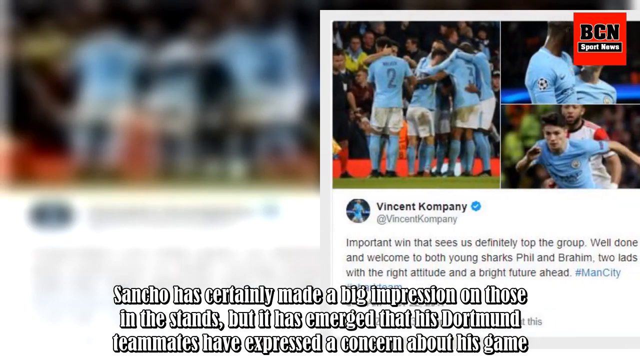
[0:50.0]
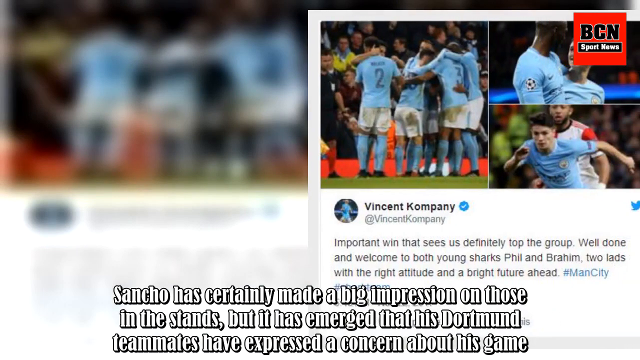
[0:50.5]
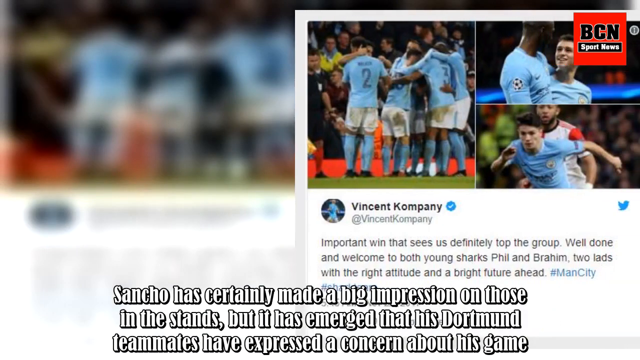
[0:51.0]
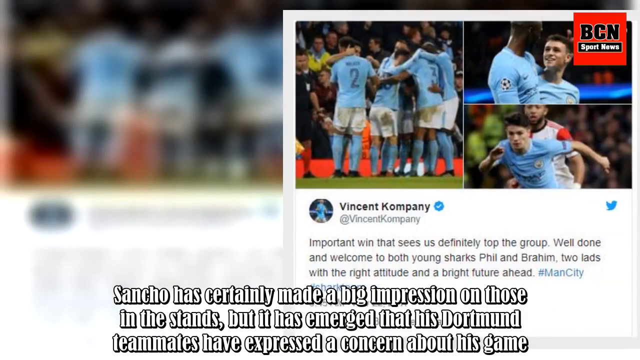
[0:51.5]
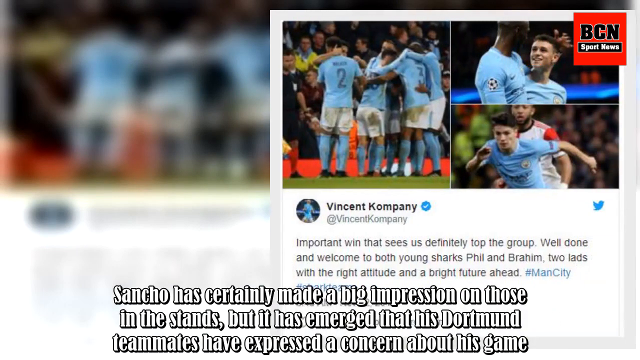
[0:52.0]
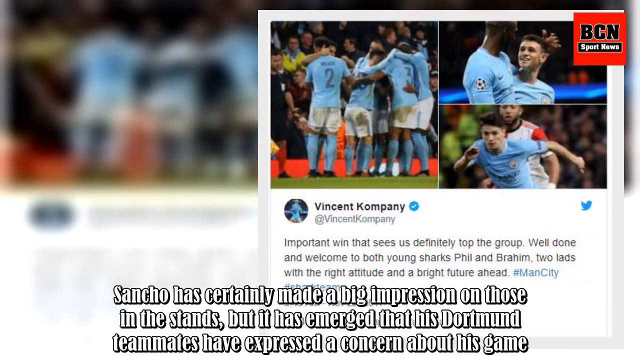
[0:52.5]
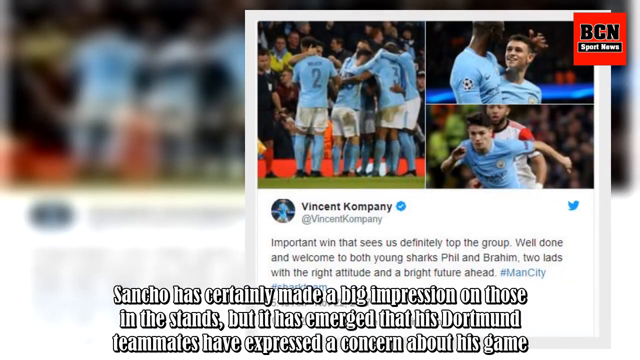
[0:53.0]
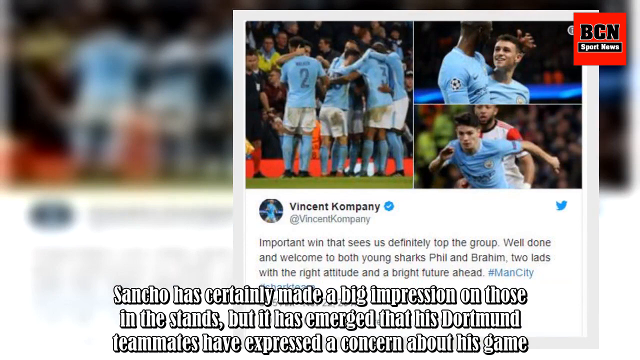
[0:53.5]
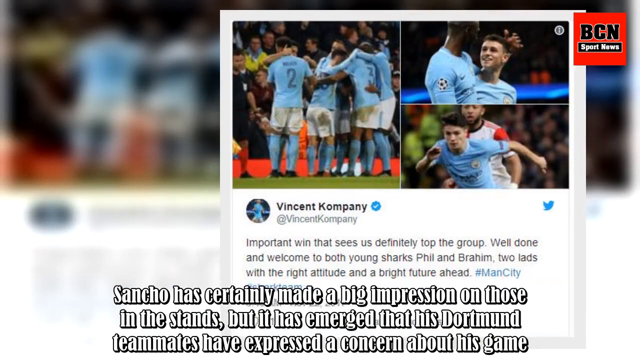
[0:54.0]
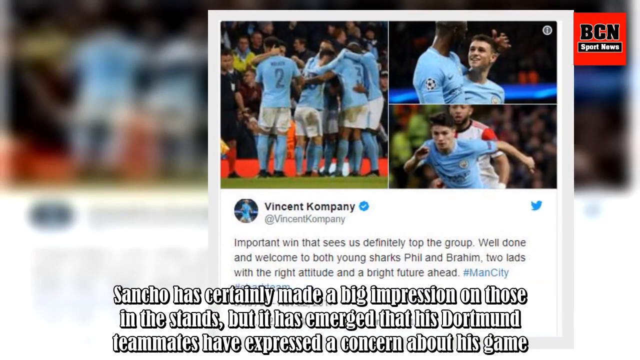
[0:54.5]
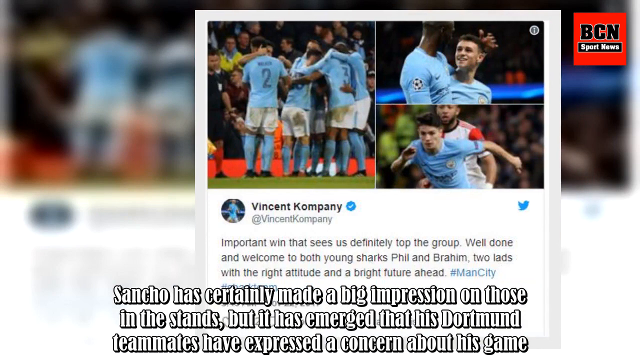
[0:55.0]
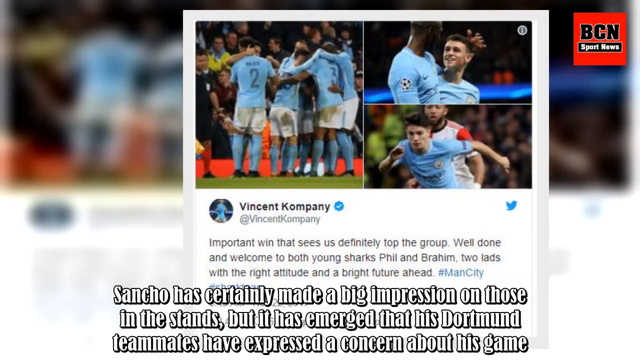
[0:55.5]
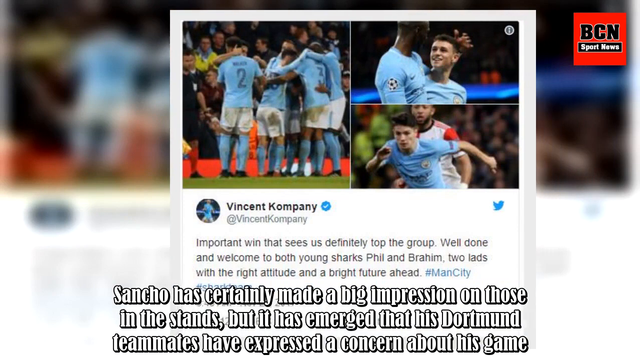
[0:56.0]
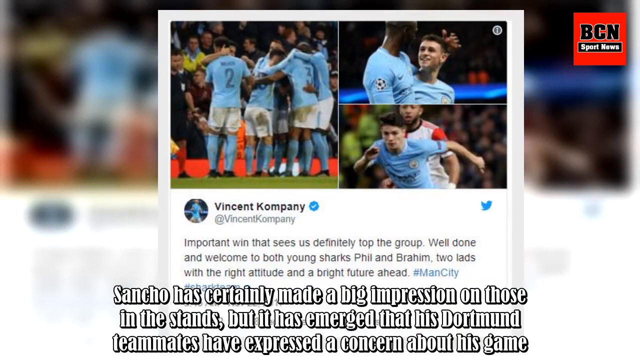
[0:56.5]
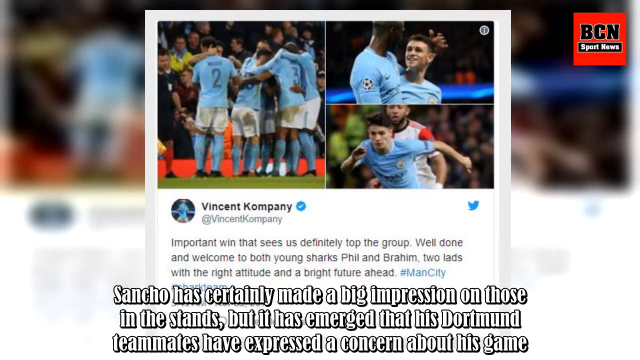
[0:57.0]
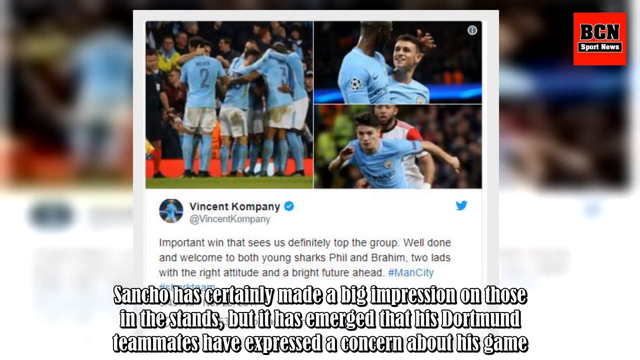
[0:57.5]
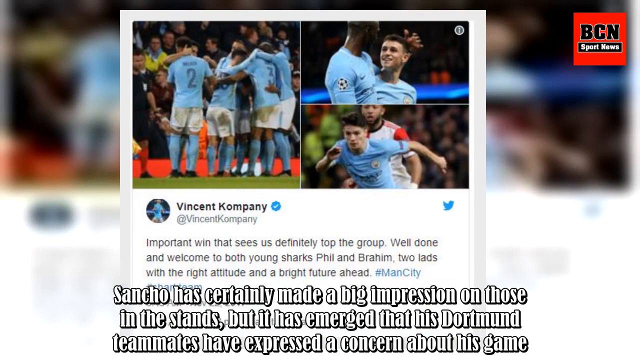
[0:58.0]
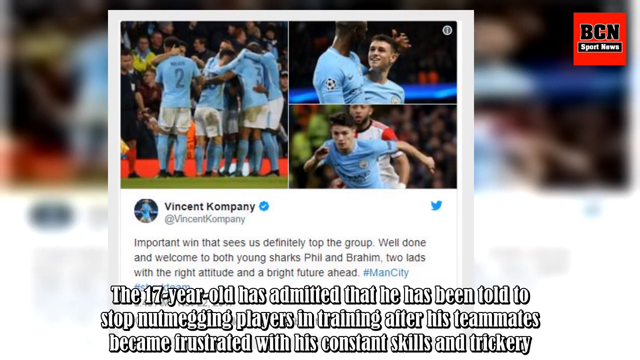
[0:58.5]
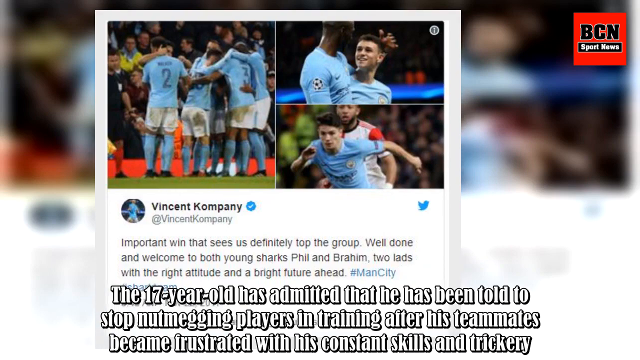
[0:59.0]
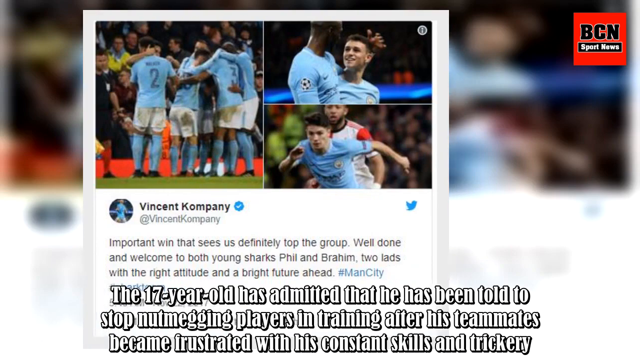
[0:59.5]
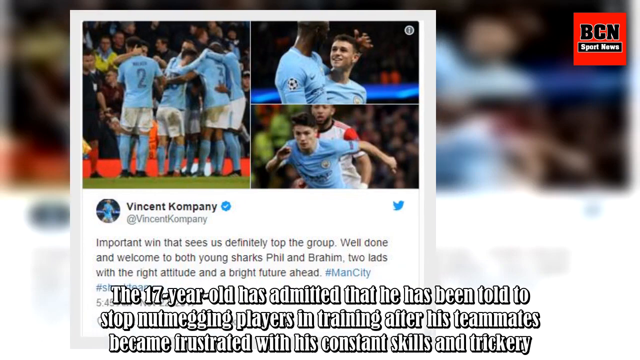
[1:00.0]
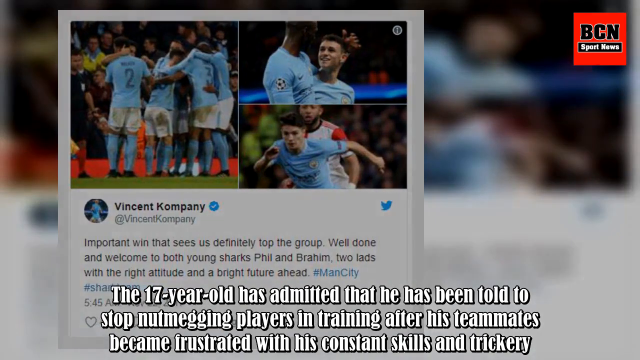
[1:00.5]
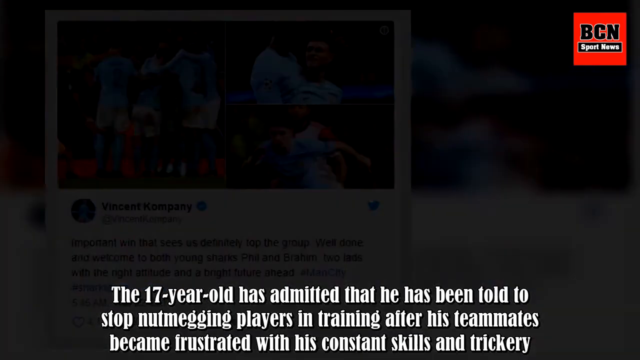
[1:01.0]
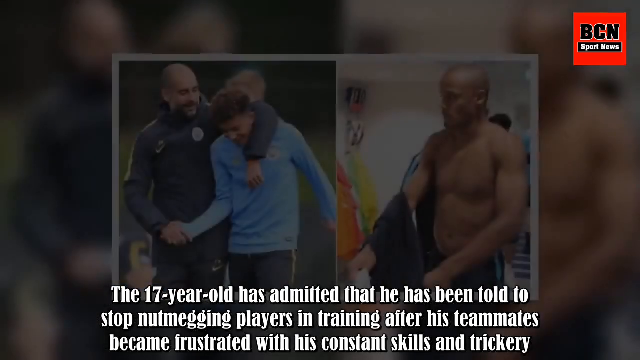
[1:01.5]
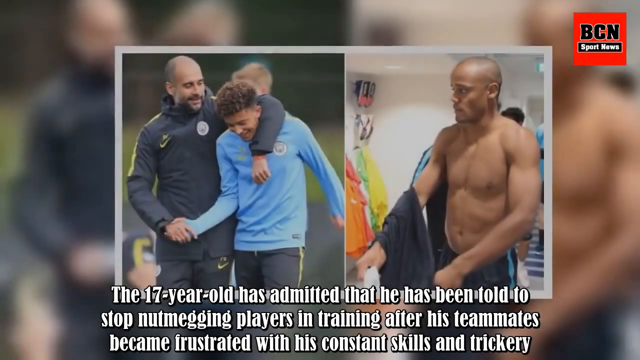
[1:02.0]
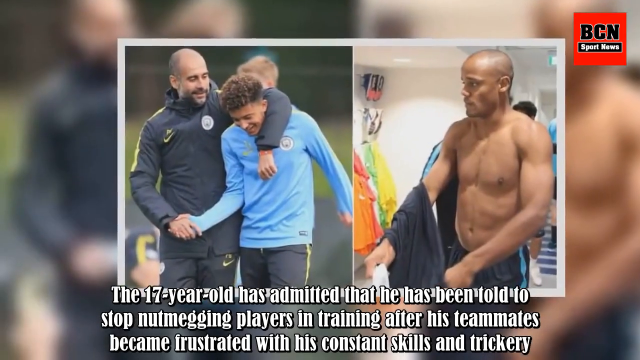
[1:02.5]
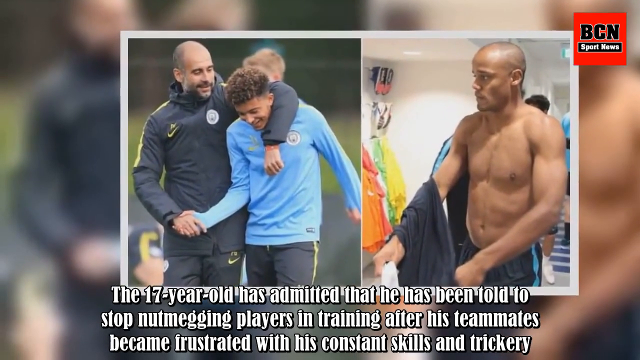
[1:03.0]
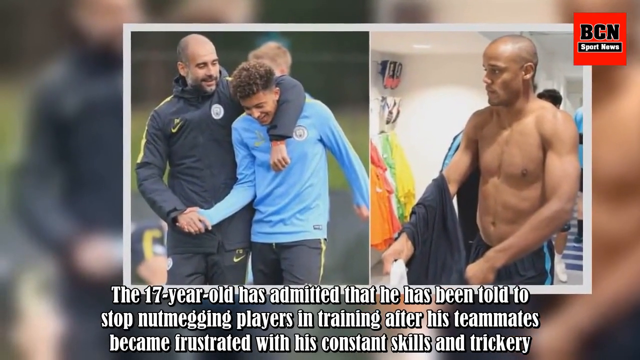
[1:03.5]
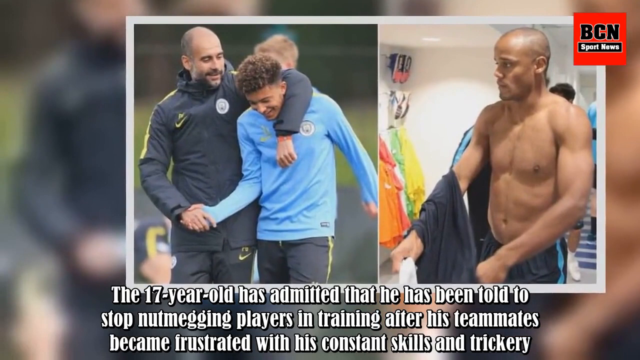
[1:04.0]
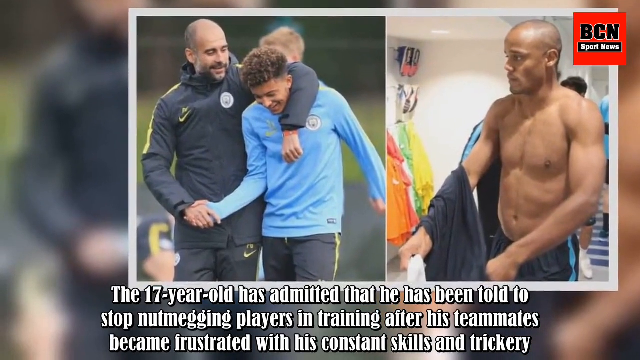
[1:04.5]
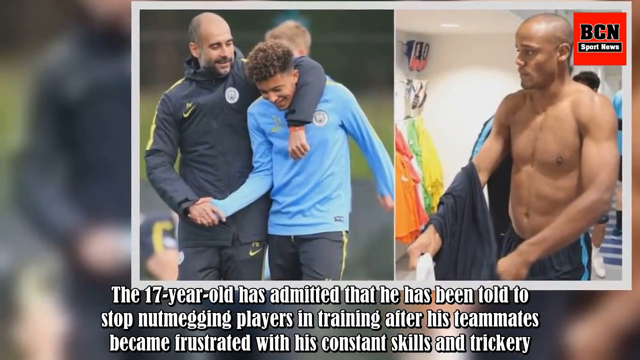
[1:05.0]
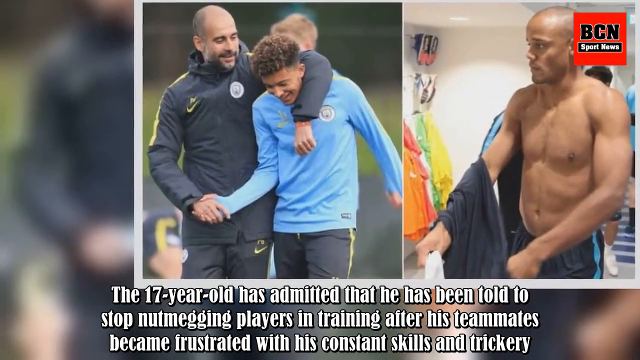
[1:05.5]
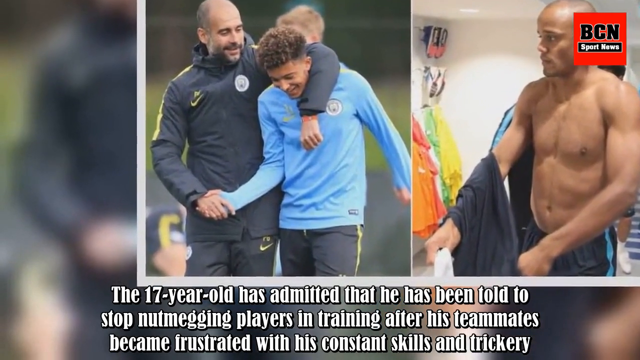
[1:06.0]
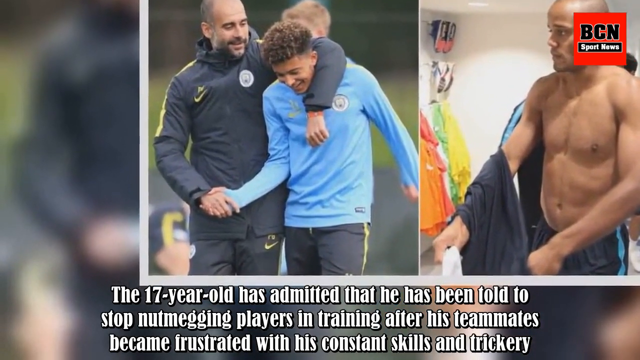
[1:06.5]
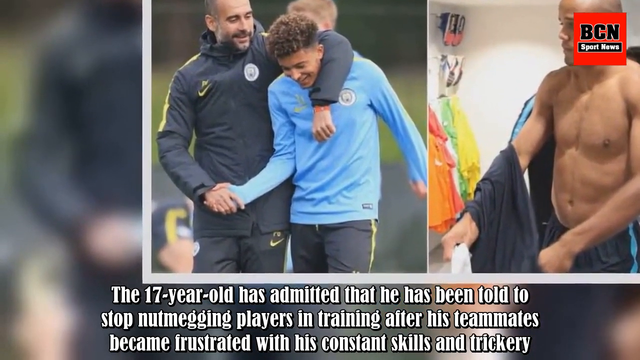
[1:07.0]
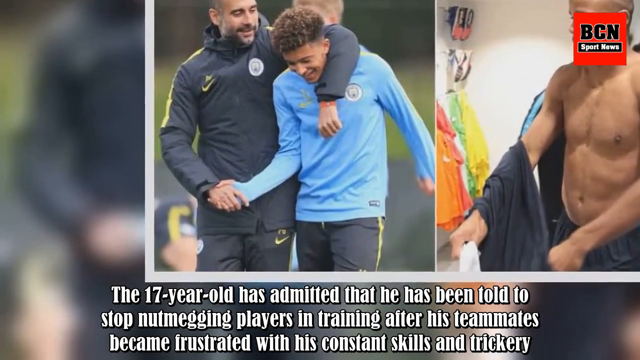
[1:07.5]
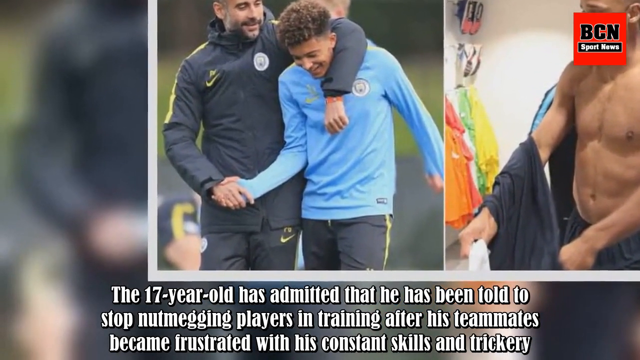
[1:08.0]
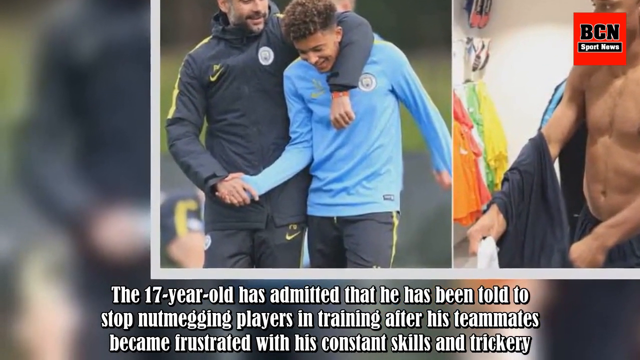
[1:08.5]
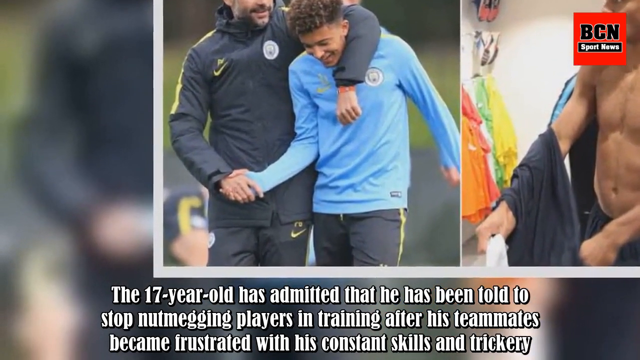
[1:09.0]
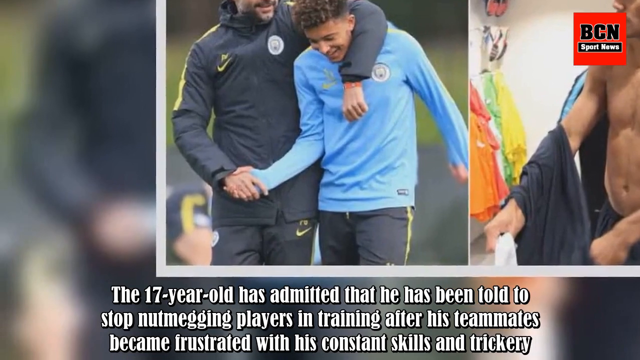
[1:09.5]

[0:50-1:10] What appears to be a Twitter post with three images starts from the right and seems to move toward the left, with a blurred version of it in the background. As it continues to move left, white text is visible underneath at the bottom of the screen. The image on the left shows a group of soccer players in a huddle wearing light blue jerseys, white shorts and light blue socks. To the right are two pictures: the top one shows two soccer players in light blue jerseys embracing, one with his hand over the other's head; the bottom one shows a soccer player in a light blue jersey who looks like he has his hand sticking out behind his back, defending against a player behind him in a white and red jersey.